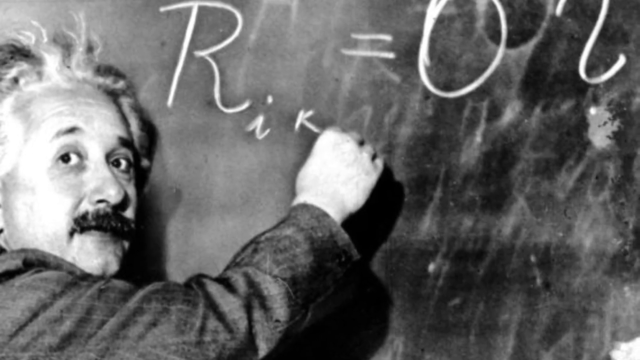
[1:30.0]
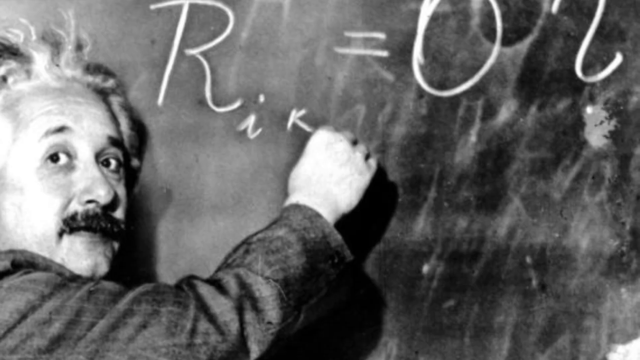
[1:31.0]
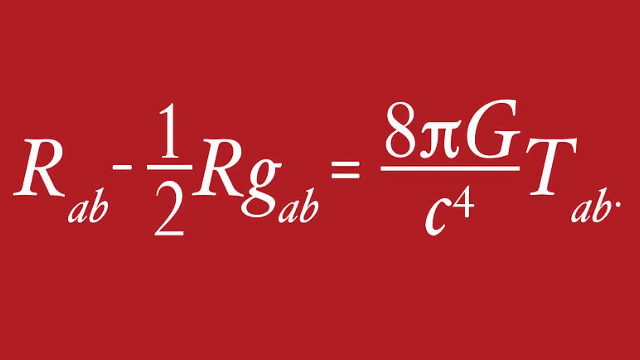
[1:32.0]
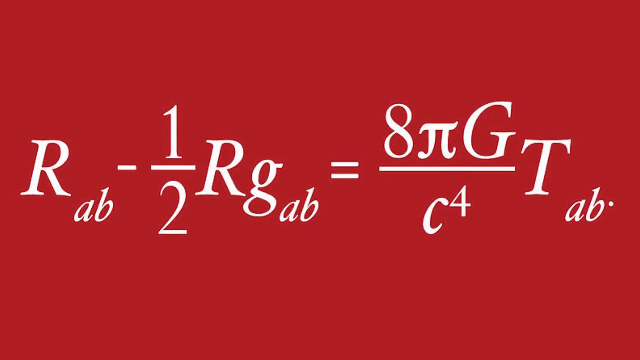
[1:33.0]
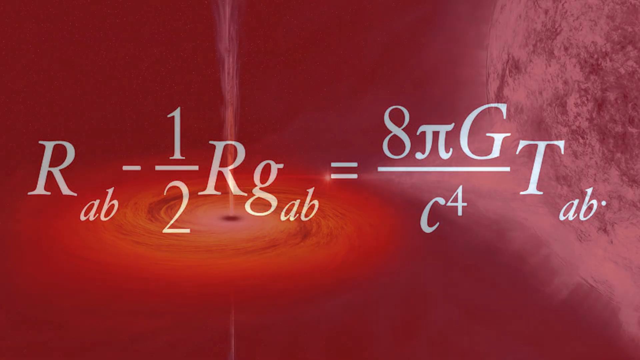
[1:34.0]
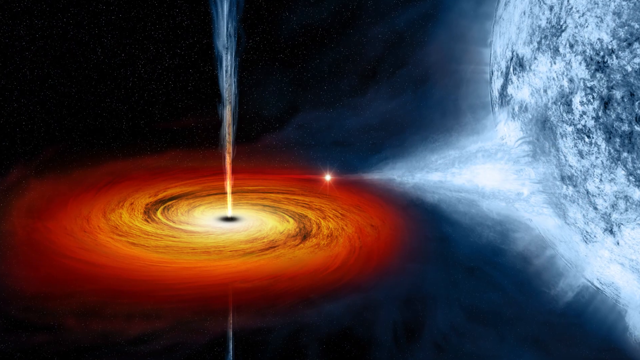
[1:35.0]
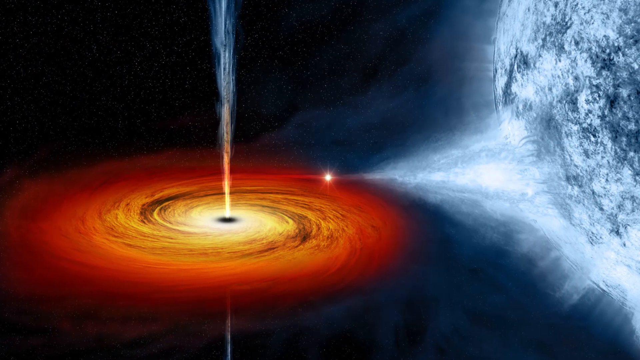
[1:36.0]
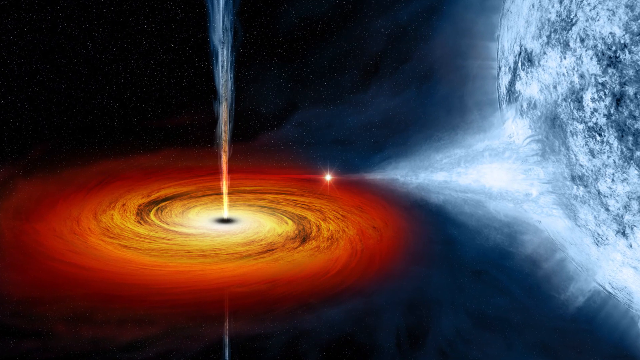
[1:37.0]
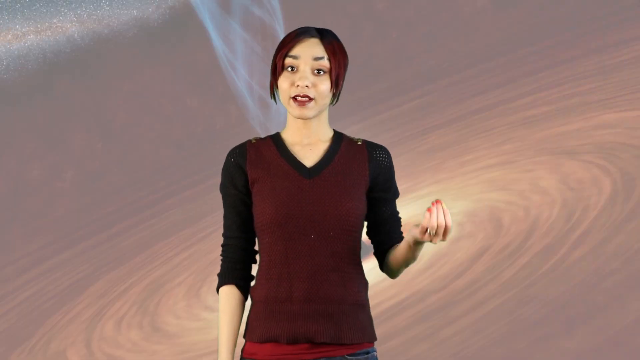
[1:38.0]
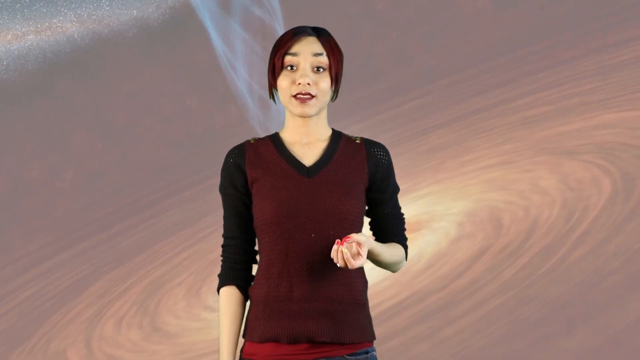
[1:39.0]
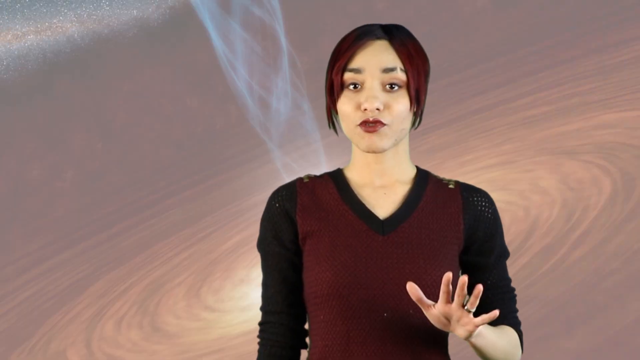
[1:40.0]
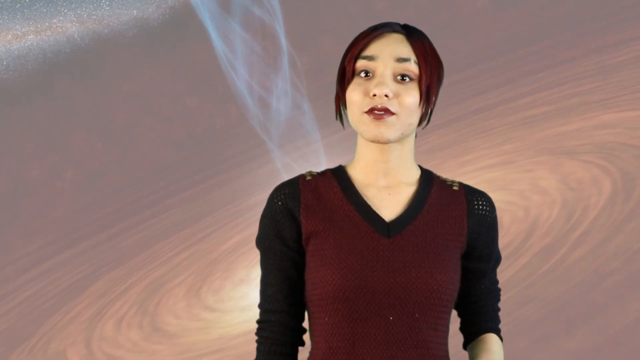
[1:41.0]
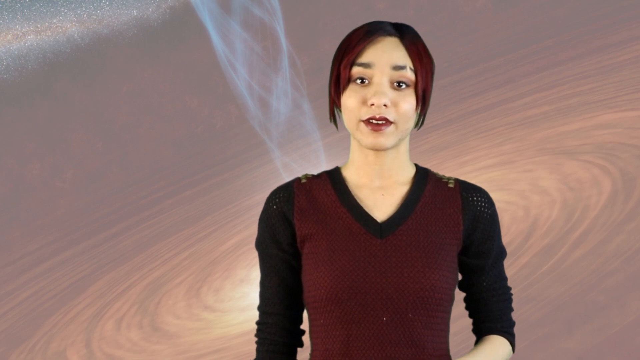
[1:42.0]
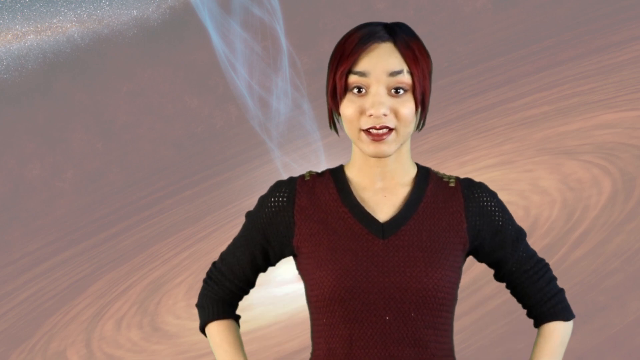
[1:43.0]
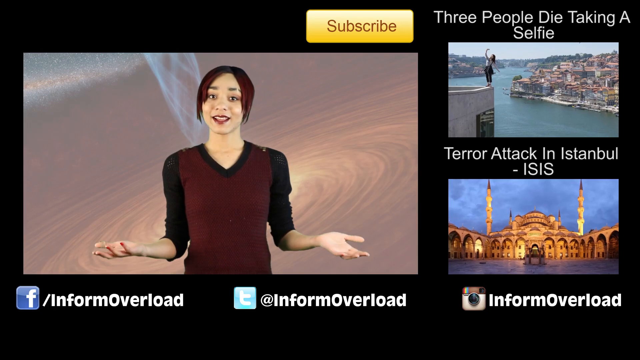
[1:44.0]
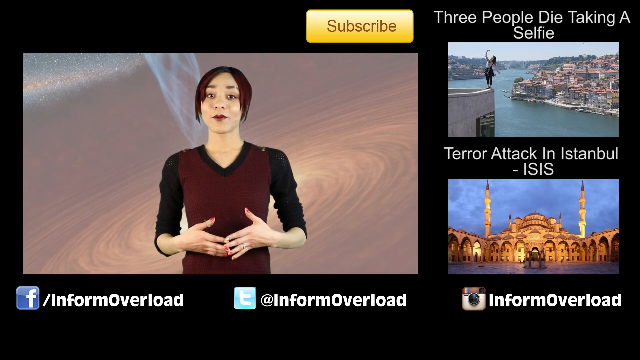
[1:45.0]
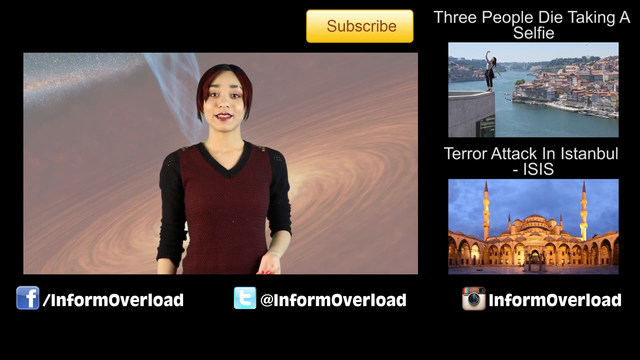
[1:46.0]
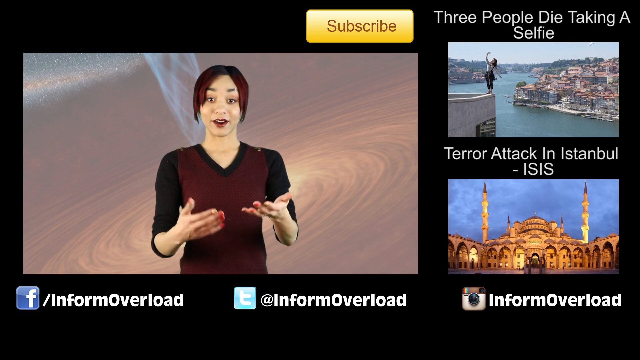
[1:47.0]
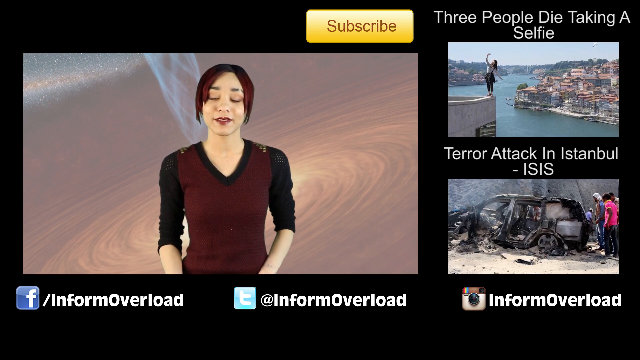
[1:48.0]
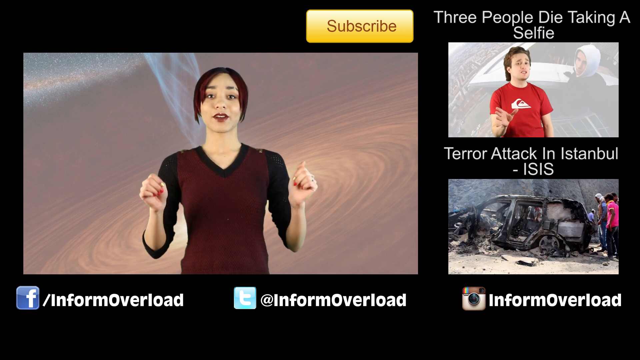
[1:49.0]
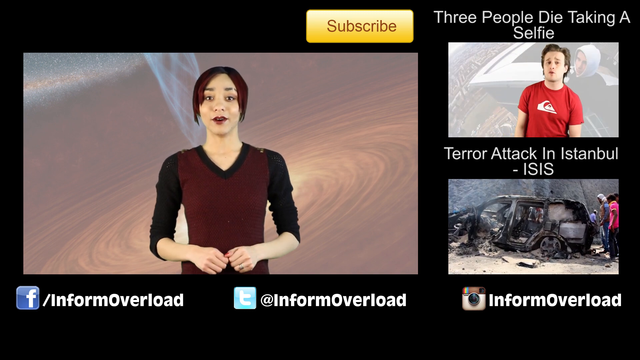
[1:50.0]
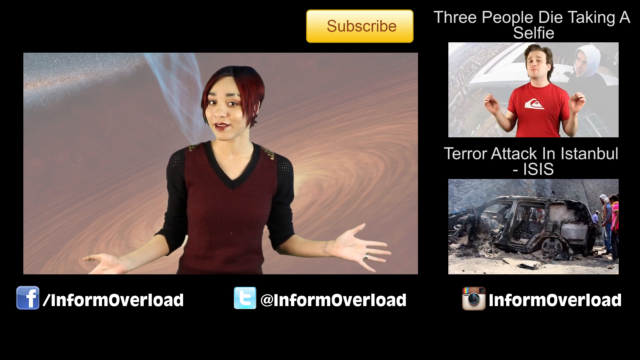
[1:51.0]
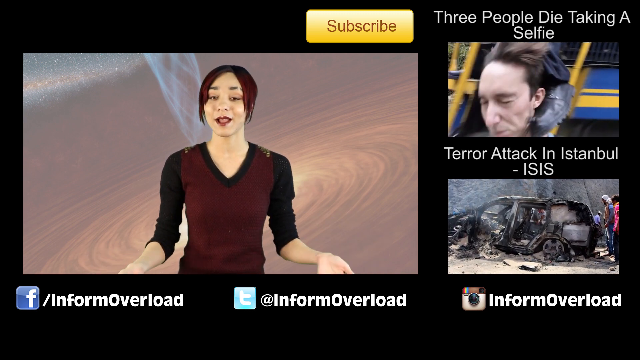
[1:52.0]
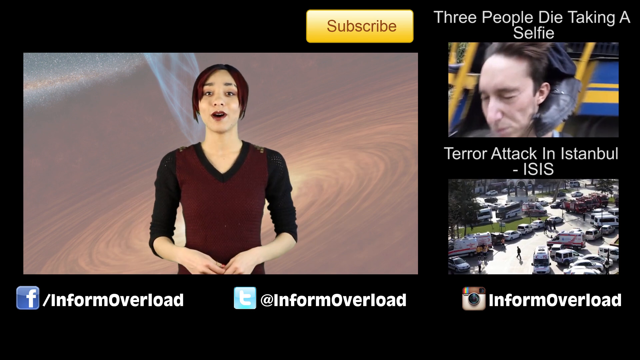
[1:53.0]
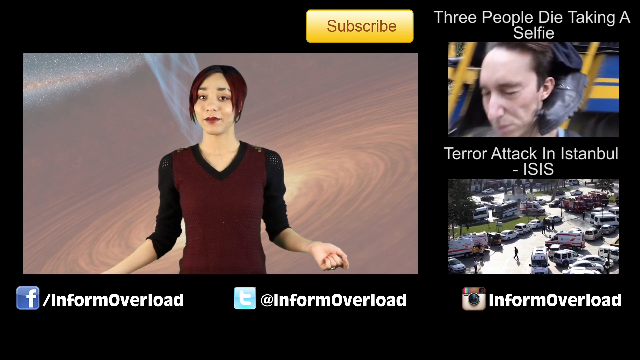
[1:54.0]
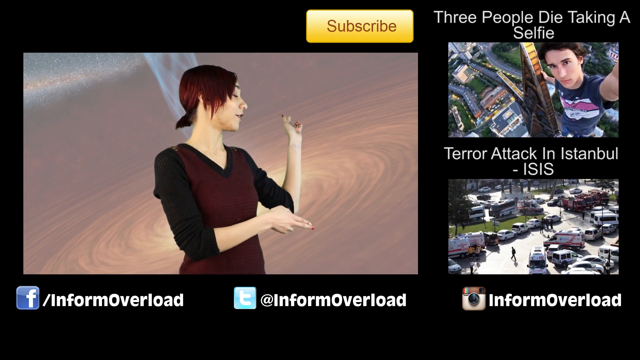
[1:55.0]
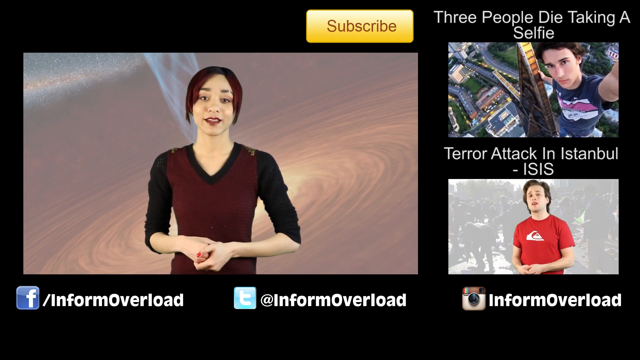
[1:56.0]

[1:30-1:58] The black and white photo of Einstein shows him on the left, looking back toward the camera with his hand extended out to the right, writing on a chalkboard, as the view slowly moves in to the right. It cuts to a red background with white across the center showing some sort of mathematical equation. Next is a swirly black hole look on the left side with a beam coming out the top of it and going off the top of the screen; it is yellow, then orange and black mixed, then red on the outside. To the right of it is what looks like the side of a planet, dark blue, with blue coming off its side toward the black hole as the view zooms in toward the middle just a little. It cuts back to her talking, very animated with her hands; her right hand moves up and down, and then she puts her hands on her hips. The view zooms out to a black background with an image of her on the left side, about two inches from the top and extending about two-thirds of the way over. Up to the right of this is a yellow button that says "subscribe", and below it are Facebook, Instagram and telegram links. On the right side are two images: one of somebody standing on a ledge over water with buildings in the background, and one of some sort of big building that looks religious, with text above it; both have her Instagram link in the bottom right corner. She continues talking, very animated with her hands out, as the other videos start swiping, showing different videos inside them. She turns to the right, points behind her, and waves as the video ends.